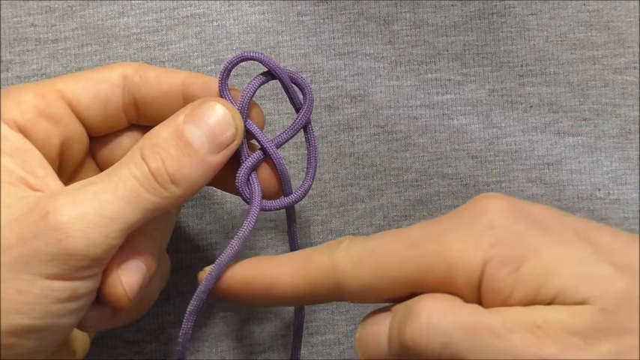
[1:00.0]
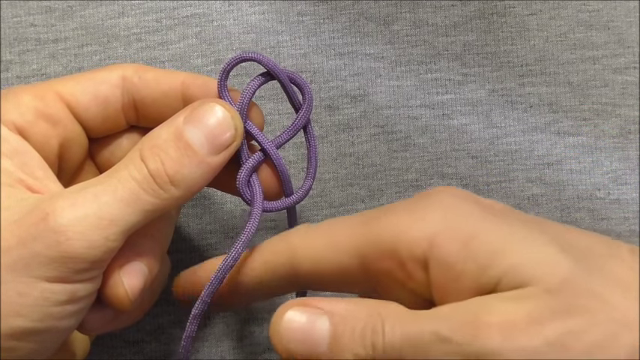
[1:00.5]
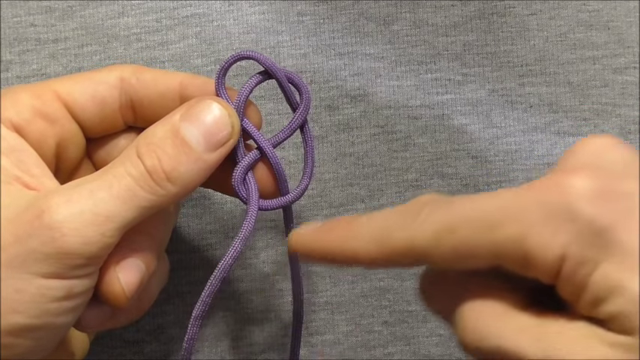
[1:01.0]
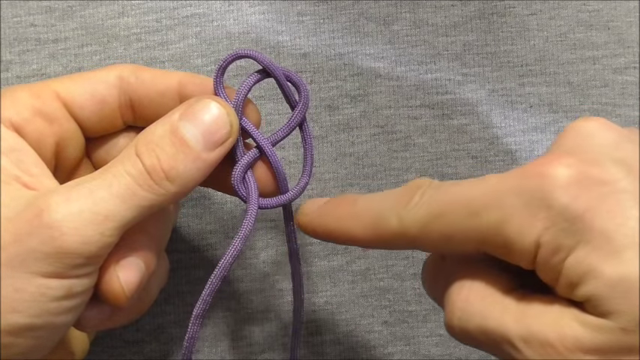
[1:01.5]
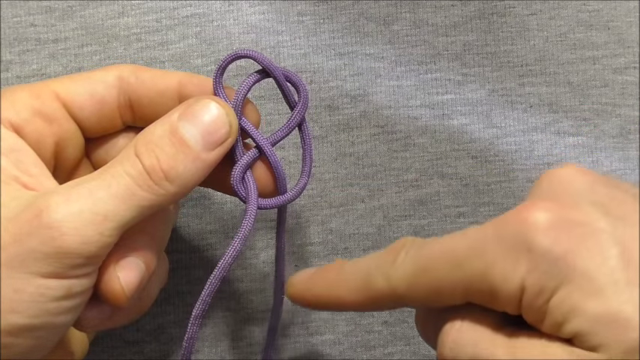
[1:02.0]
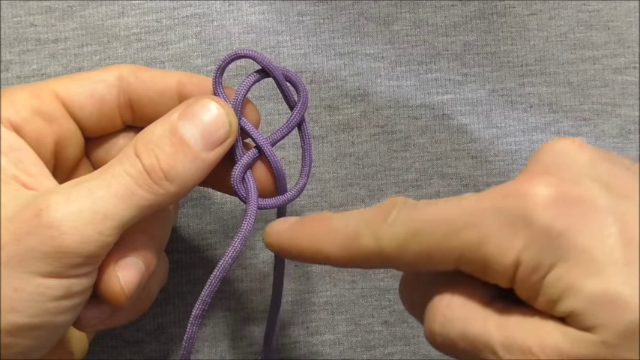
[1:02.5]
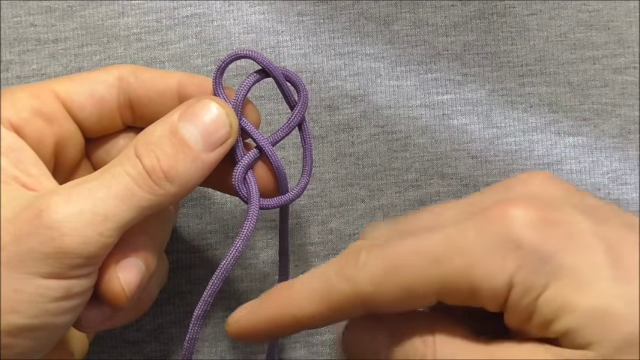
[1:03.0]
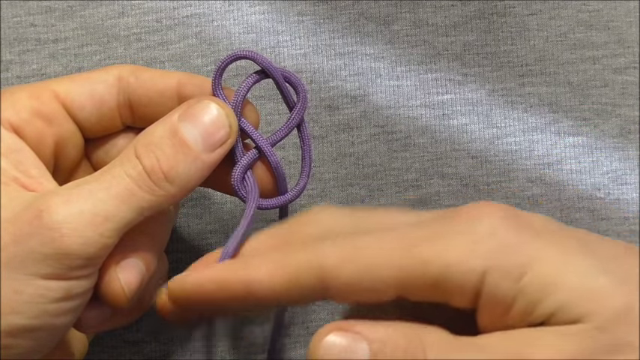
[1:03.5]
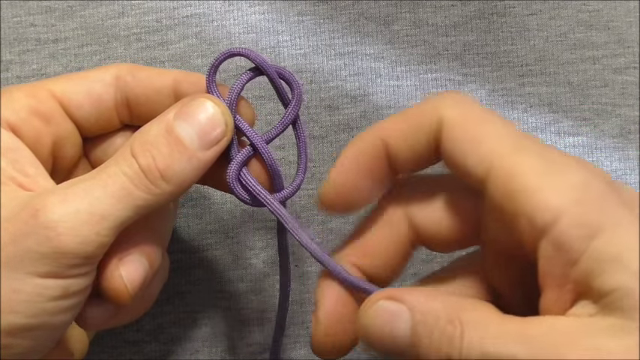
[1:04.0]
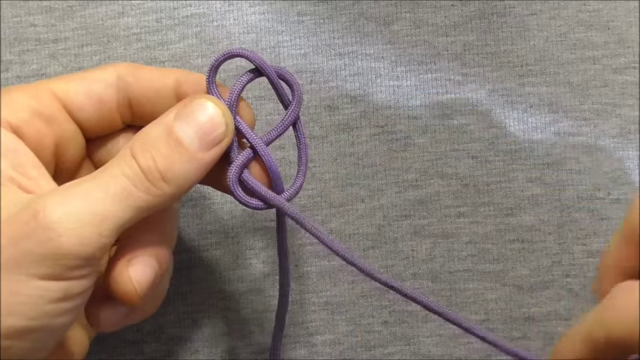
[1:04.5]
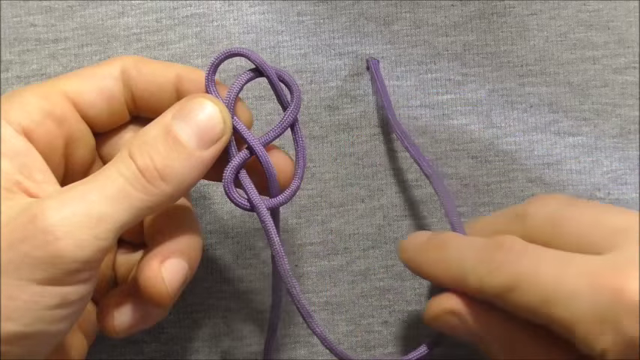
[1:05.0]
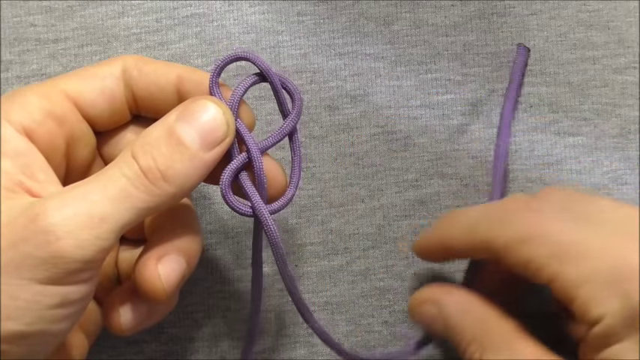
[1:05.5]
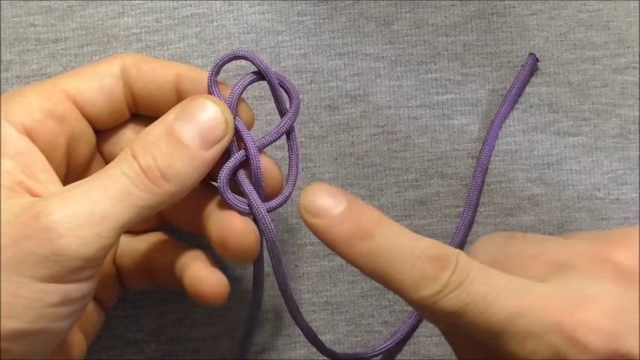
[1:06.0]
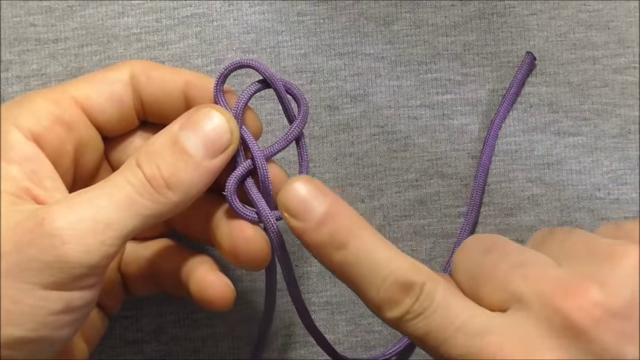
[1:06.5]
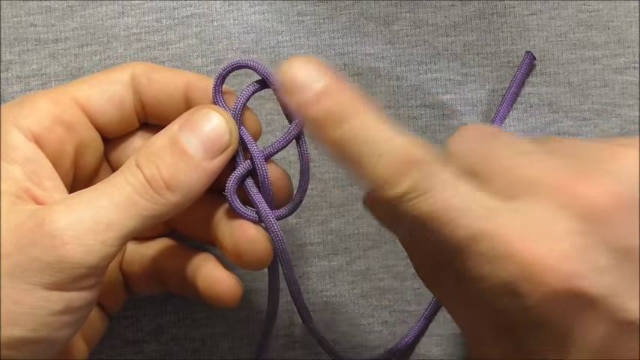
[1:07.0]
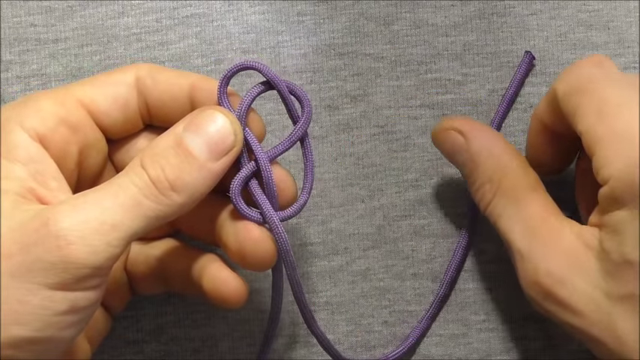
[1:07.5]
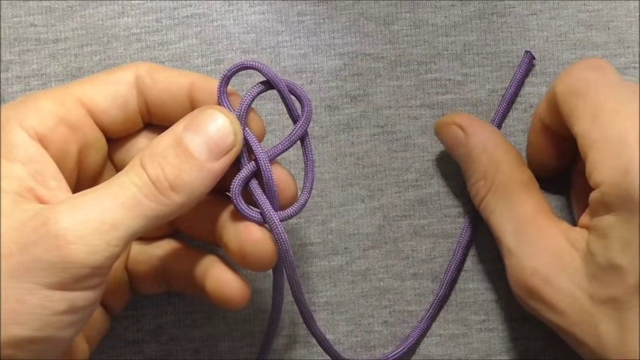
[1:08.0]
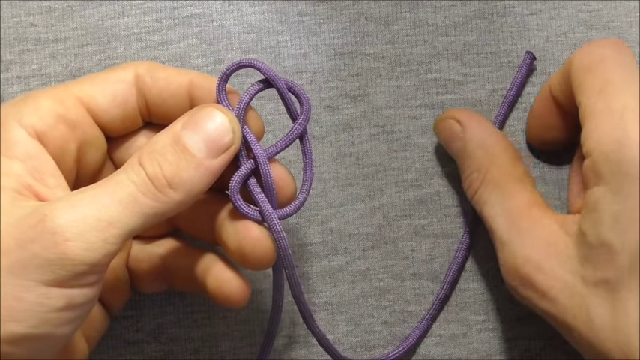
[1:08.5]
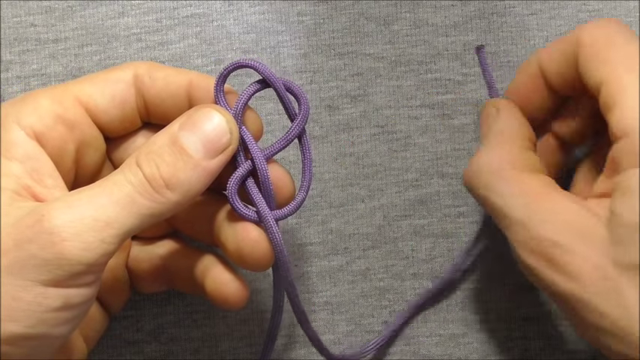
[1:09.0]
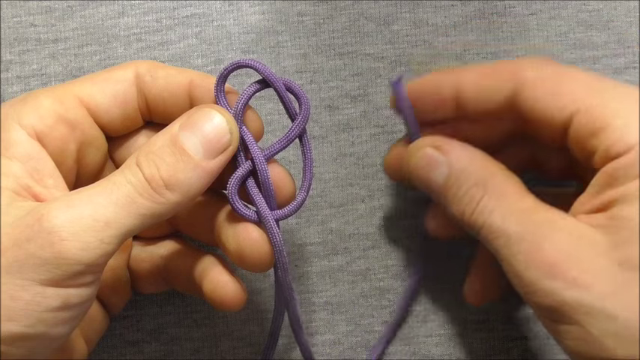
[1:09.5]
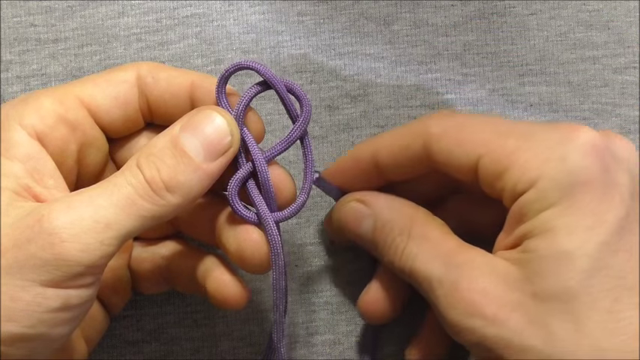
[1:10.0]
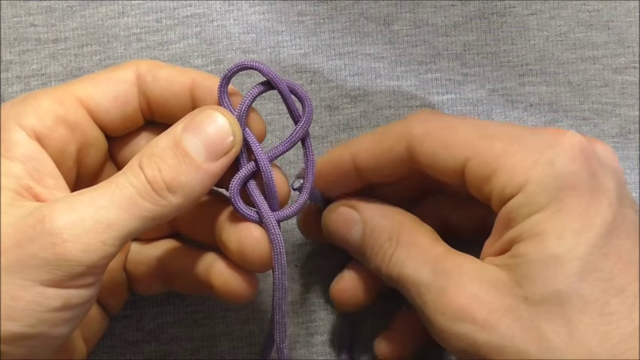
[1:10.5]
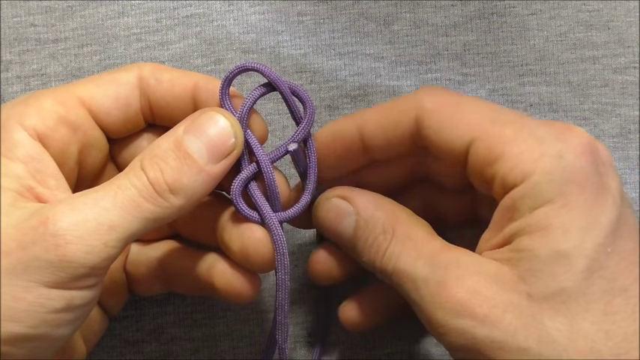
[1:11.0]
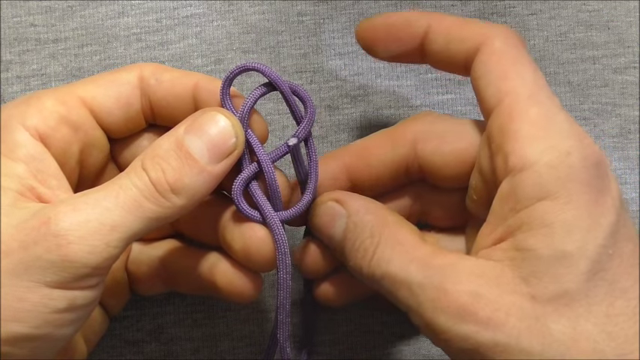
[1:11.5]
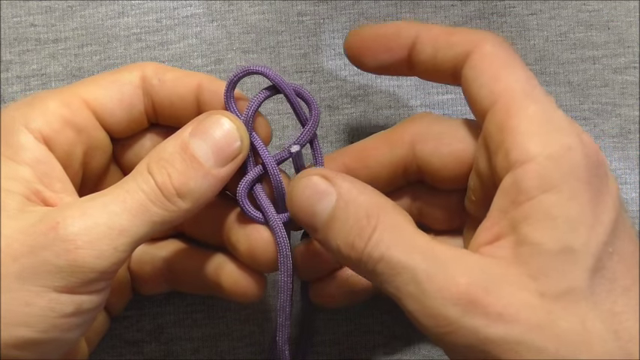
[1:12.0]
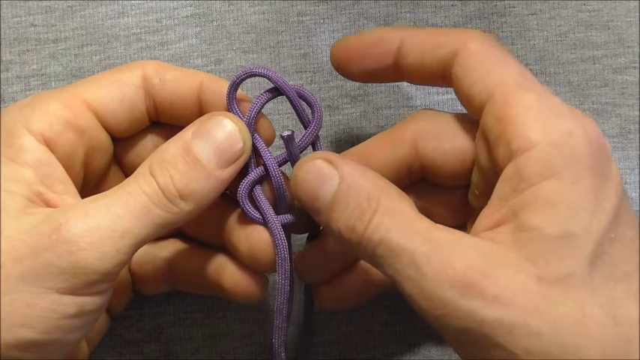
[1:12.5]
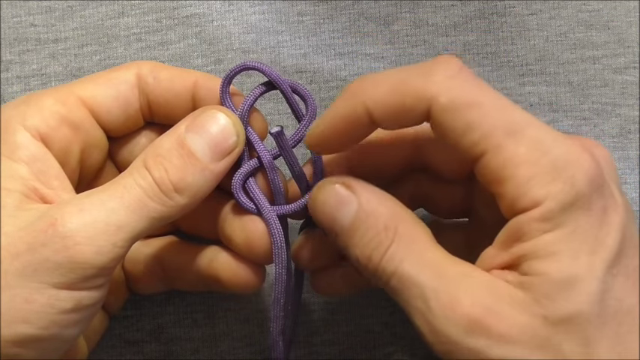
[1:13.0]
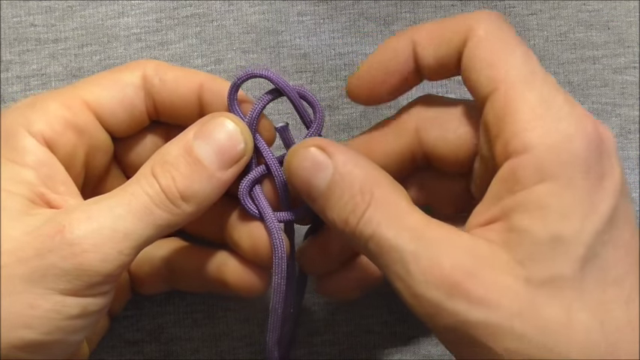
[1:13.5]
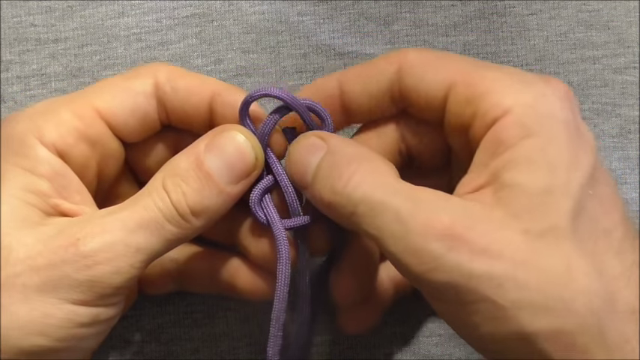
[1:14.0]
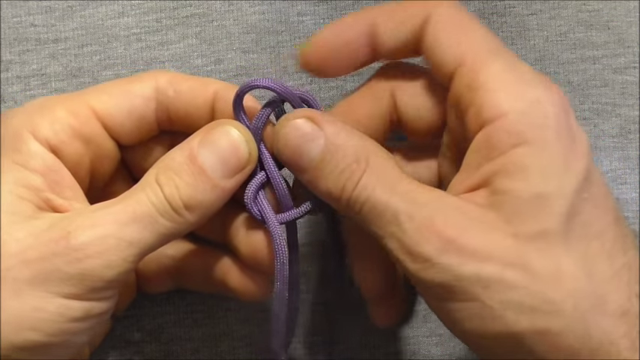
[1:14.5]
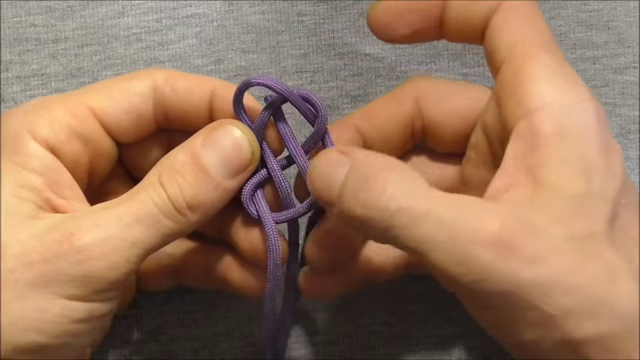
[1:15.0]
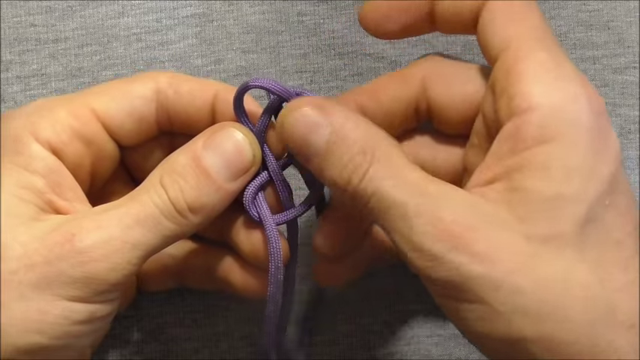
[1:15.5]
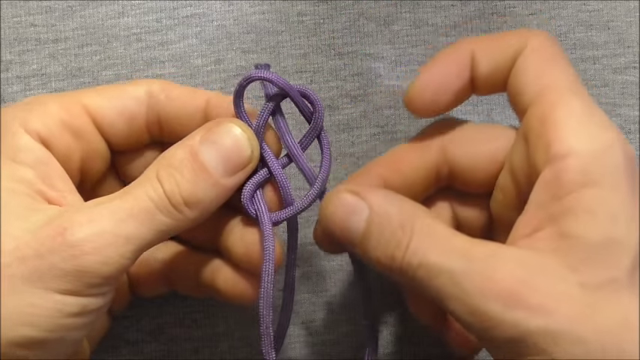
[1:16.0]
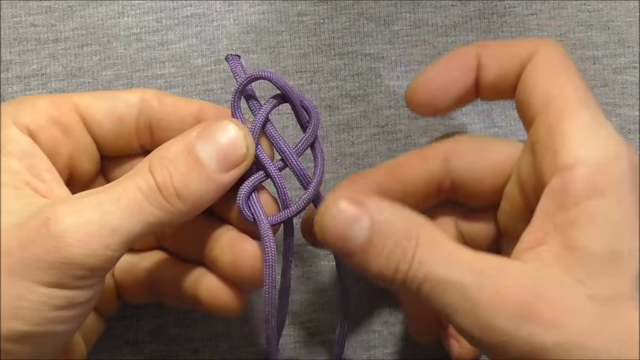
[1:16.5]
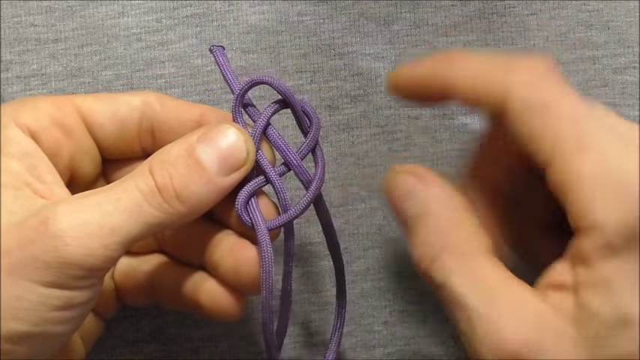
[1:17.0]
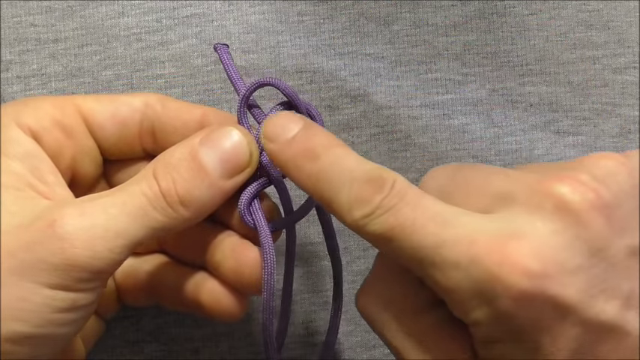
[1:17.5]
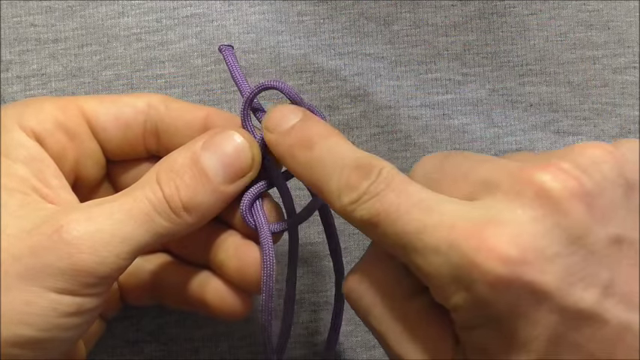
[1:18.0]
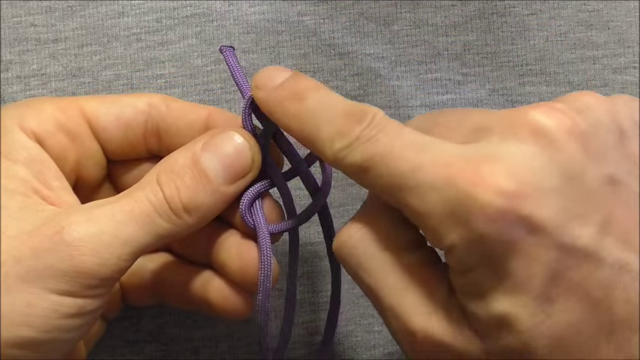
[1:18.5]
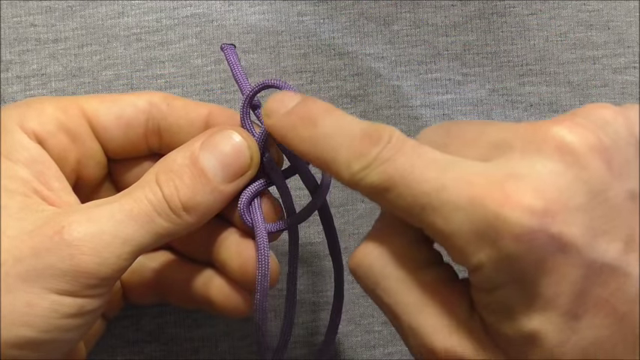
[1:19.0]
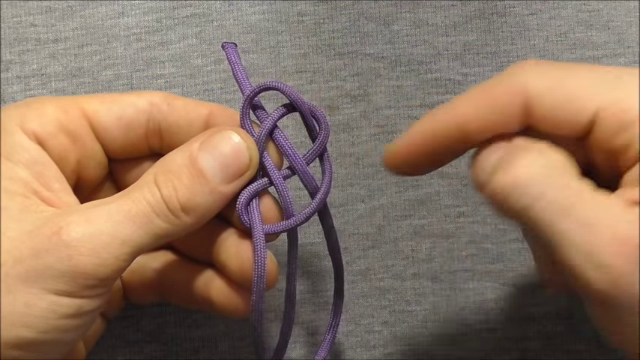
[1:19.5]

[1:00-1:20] A person's hands work on creating a complicated-looking loop from a deep purple shoelace-like fabric, against a backdrop of what looks like a grey woolen fabric. The right index finger points to one of the hanging edges of the fabric. The hand then grabs the second hanging edge on the left, pulls it to the right, and takes its tip to begin looping it again. The edge is passed upward through the right side of the bottom loop, then slowly and carefully pushed backwards into the middle loop, still in an upward motion. The right index finger touches the upper loop as if to indicate or demonstrate the direction of the looping.